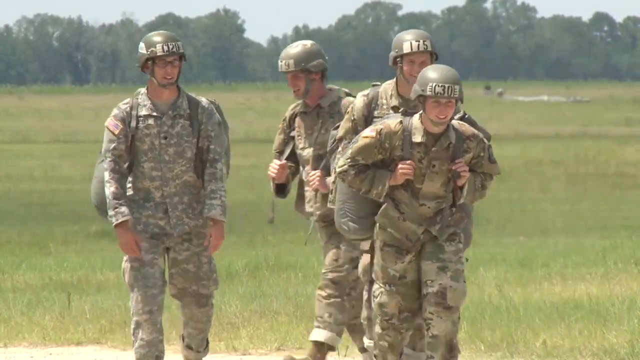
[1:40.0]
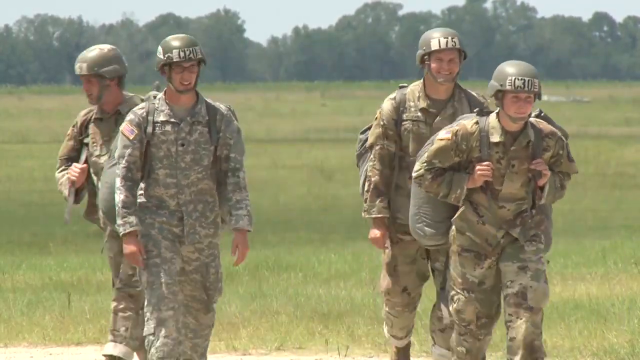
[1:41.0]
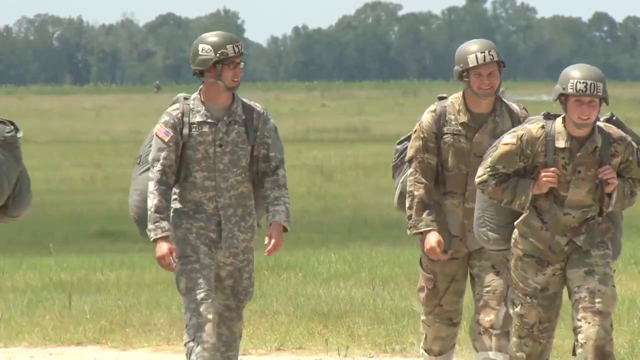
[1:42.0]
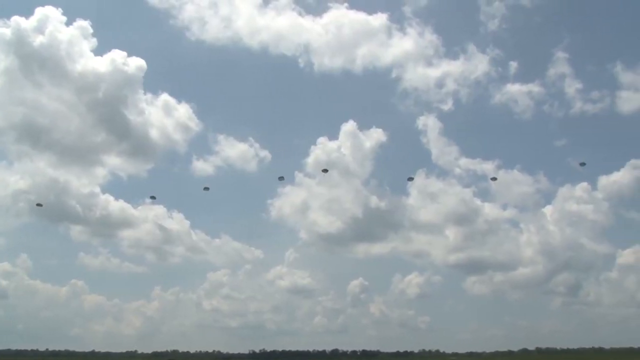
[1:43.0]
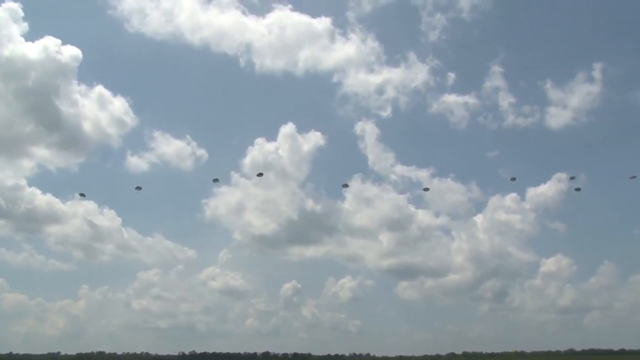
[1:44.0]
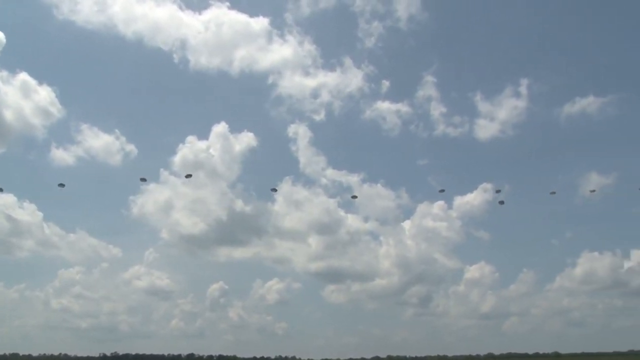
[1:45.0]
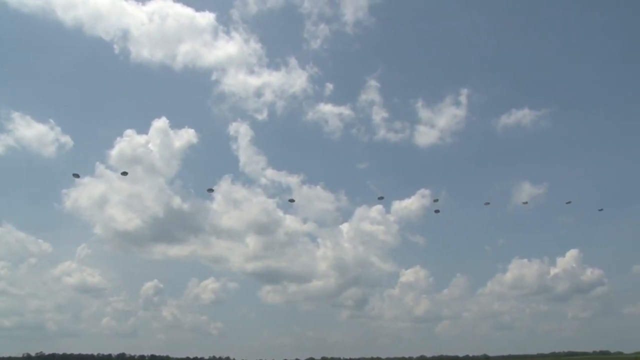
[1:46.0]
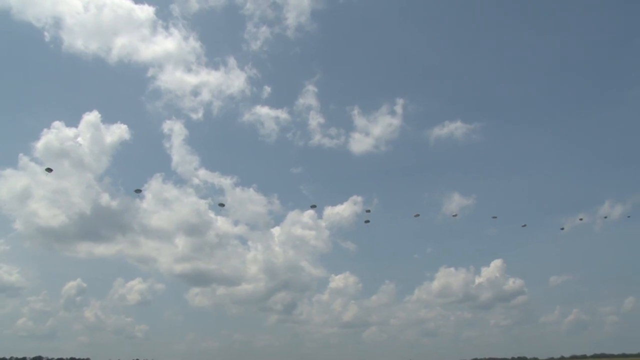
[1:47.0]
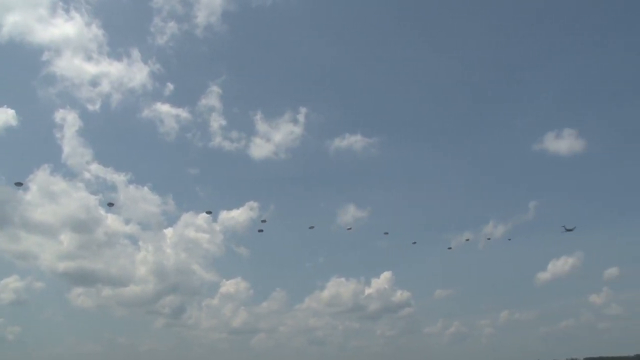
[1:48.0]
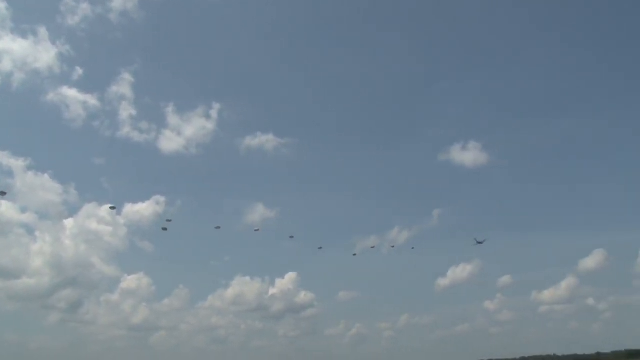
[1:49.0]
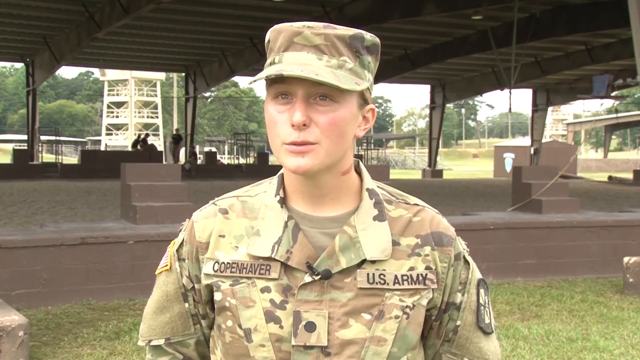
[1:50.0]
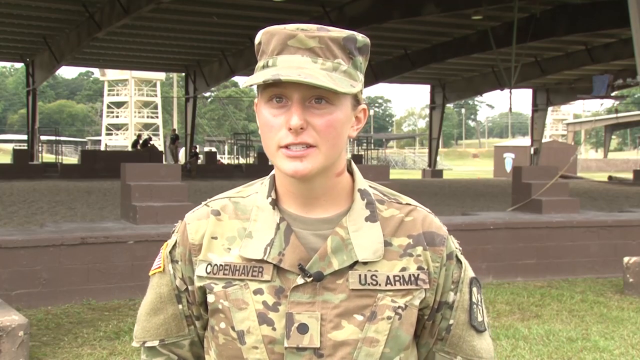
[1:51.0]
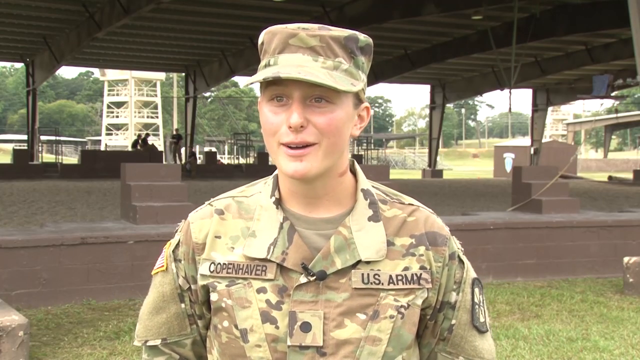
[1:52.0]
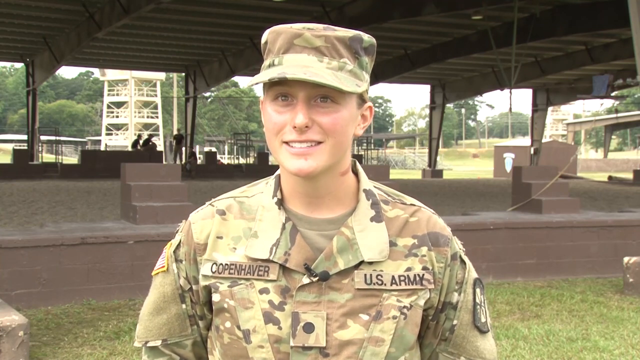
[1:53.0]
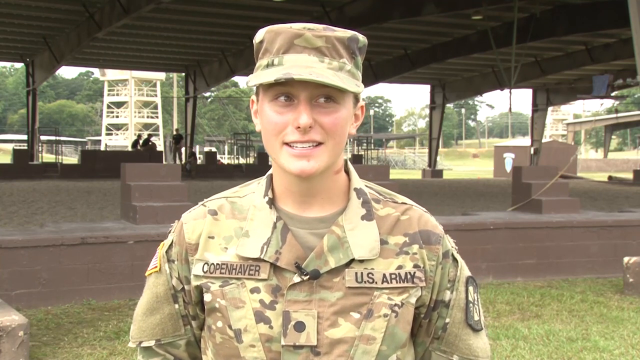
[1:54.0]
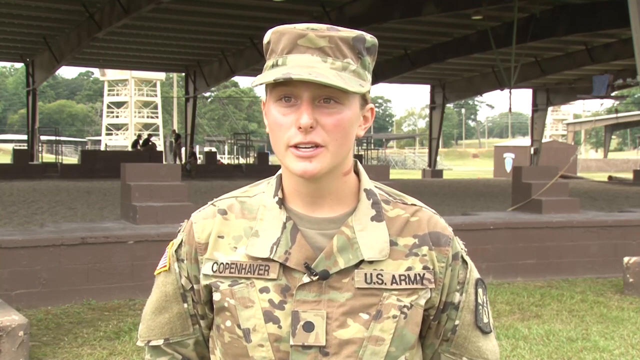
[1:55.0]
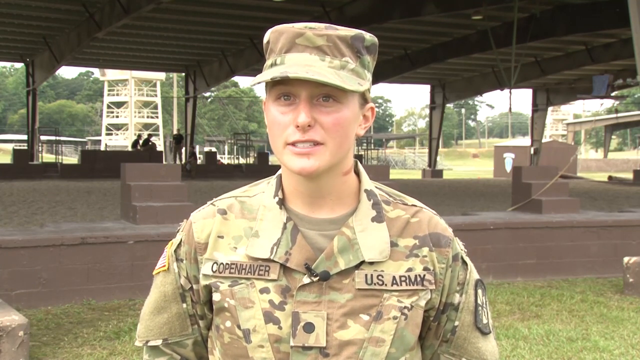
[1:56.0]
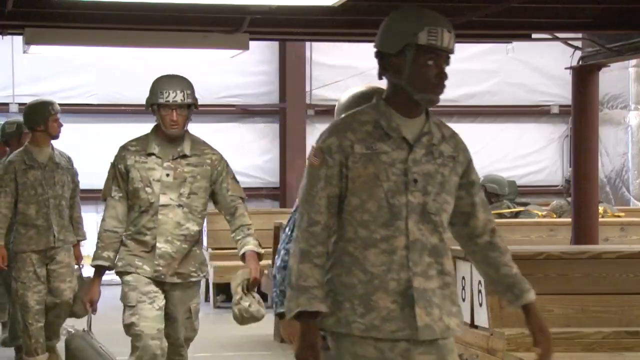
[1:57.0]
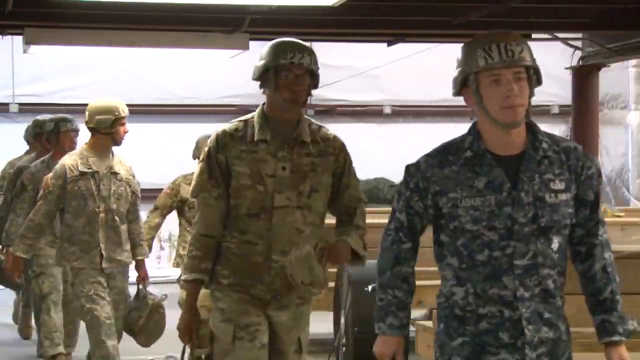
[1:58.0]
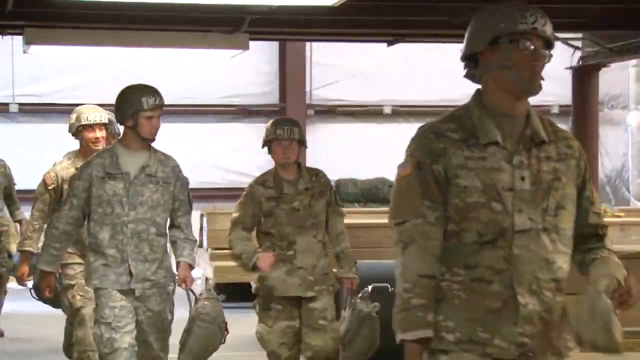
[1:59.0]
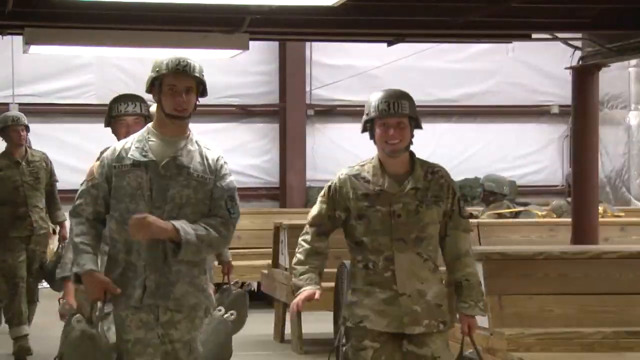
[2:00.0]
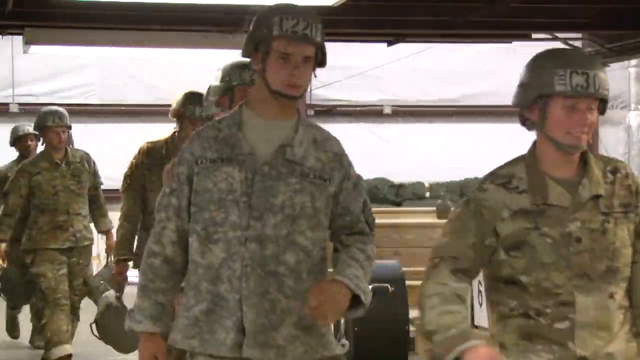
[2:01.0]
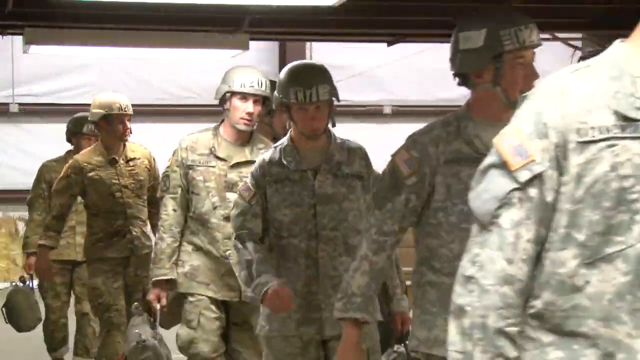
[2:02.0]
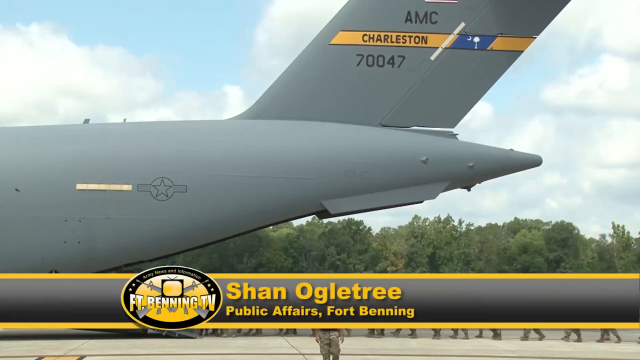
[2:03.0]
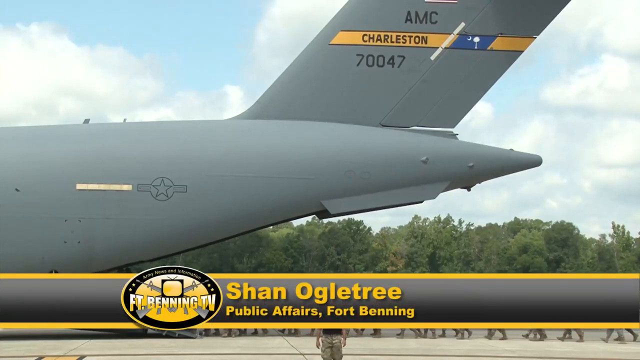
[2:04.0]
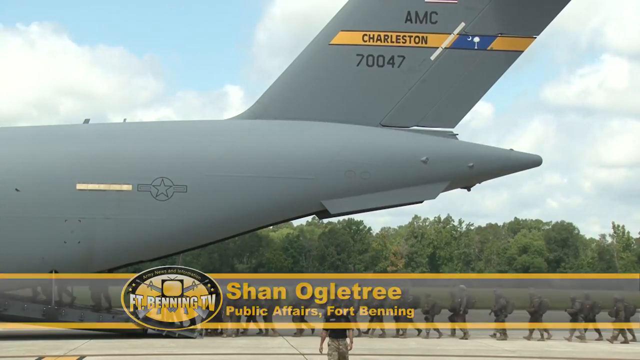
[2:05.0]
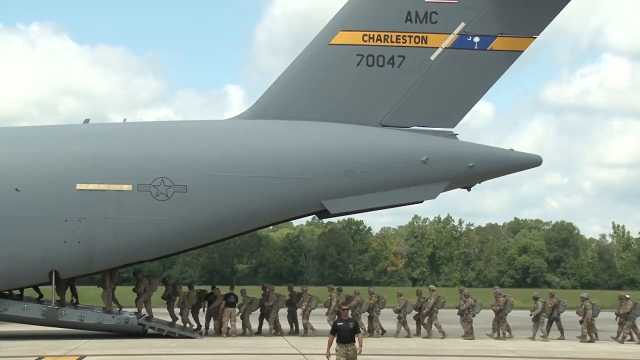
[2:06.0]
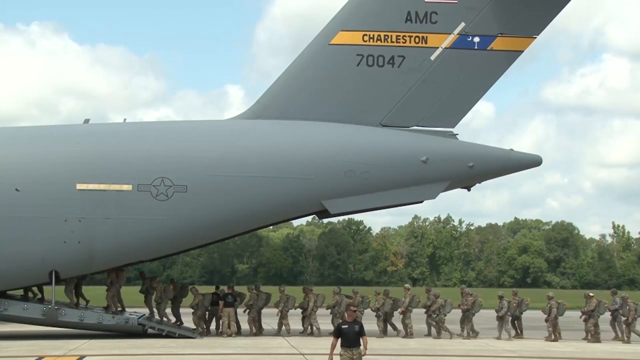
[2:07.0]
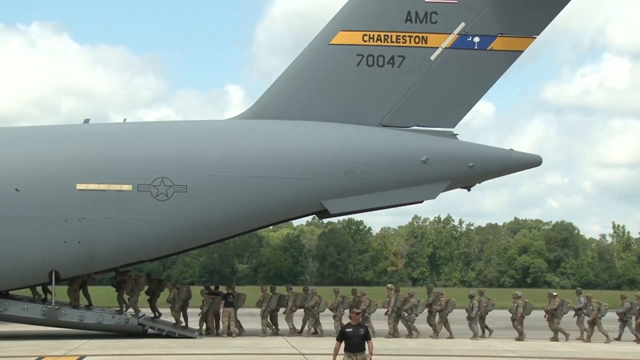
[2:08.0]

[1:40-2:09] Four paratrooper-type troops, apparently one female and three males, wear camouflage tops and bottoms of varying styles and hard helmets as they walk in a grassy field. Next, several paratroopers with deployed parachutes are in the air, falling slowly to the ground. The camera pans right to show many more paratroopers, and in the far distance on the right side of the screen a jet flies away. Then a soldier wears a camouflage top and a camouflage cover or cap, with an undershirt that looks more tan than green, probably brown; her camouflage fatigues are kind of tan and brown. Her outer shirt reads "Copenhaver" on the right chest and "U.S. Army" on the left chest. She appears to have a hickey or birthmark on the left side of her neck. She talks to somebody off screen.